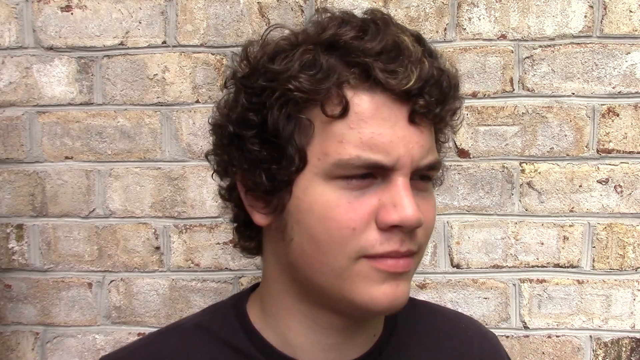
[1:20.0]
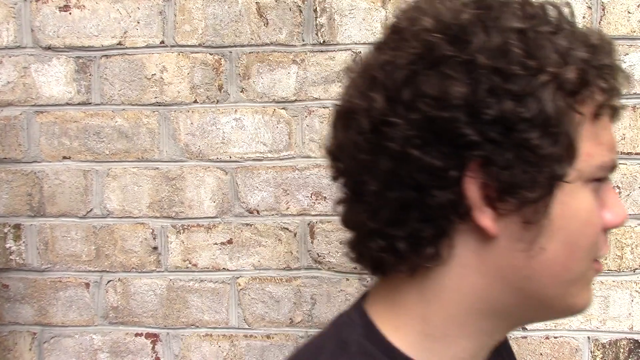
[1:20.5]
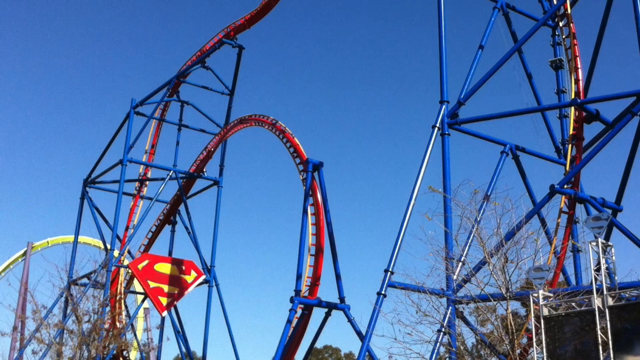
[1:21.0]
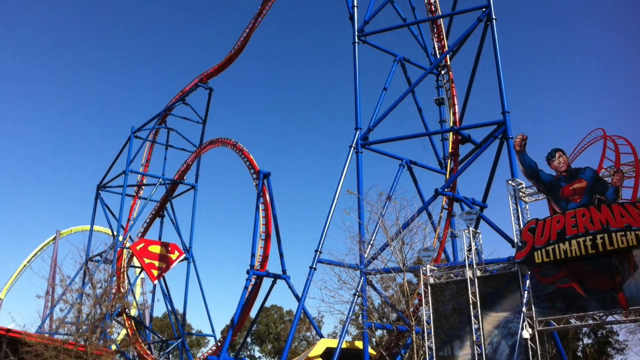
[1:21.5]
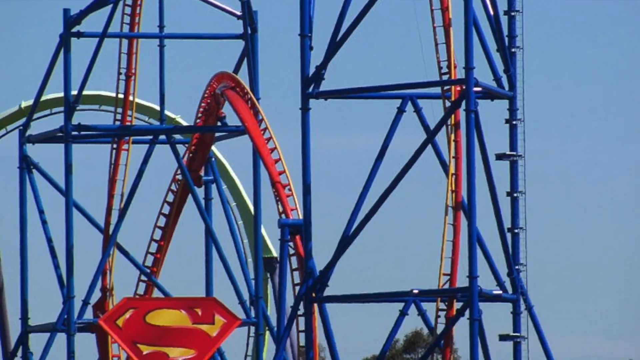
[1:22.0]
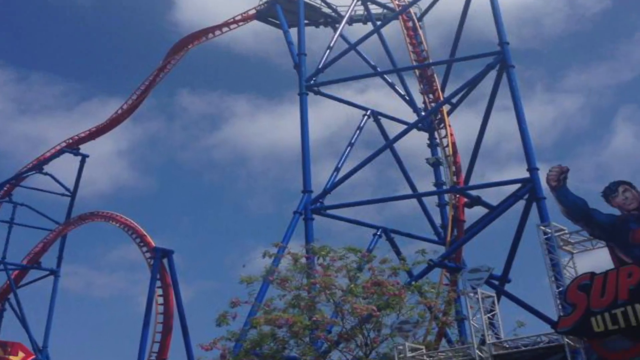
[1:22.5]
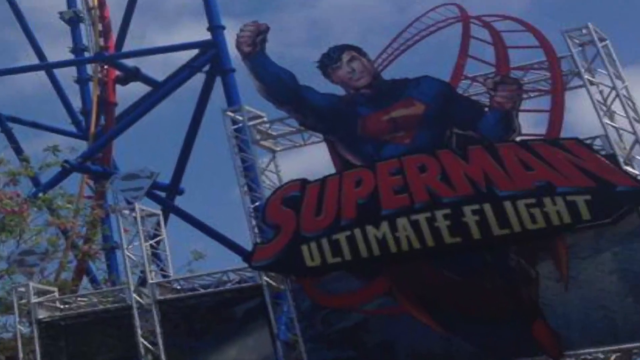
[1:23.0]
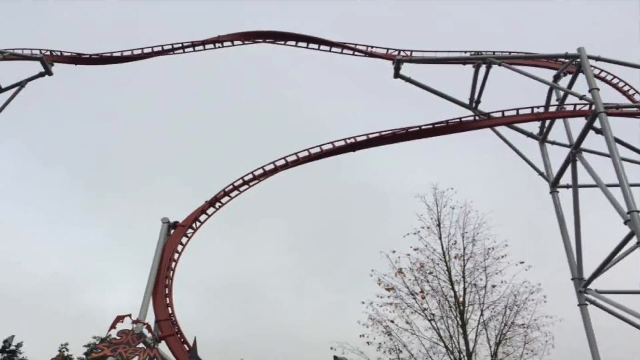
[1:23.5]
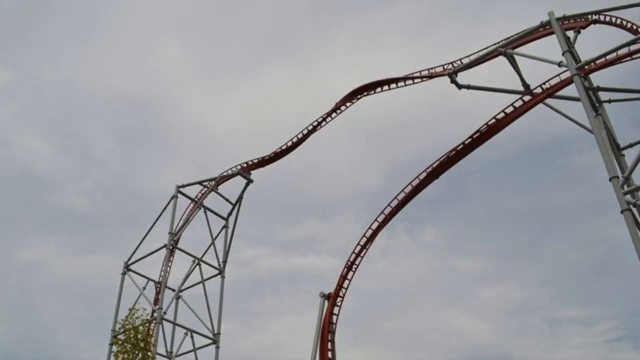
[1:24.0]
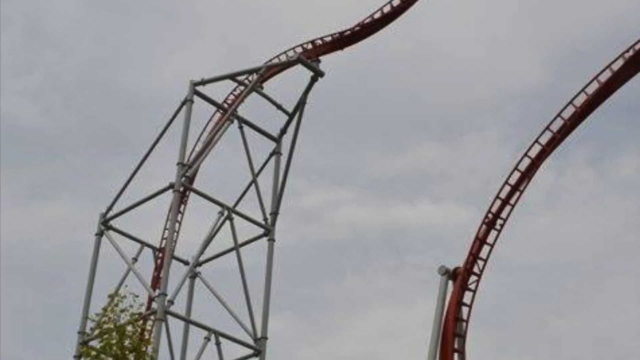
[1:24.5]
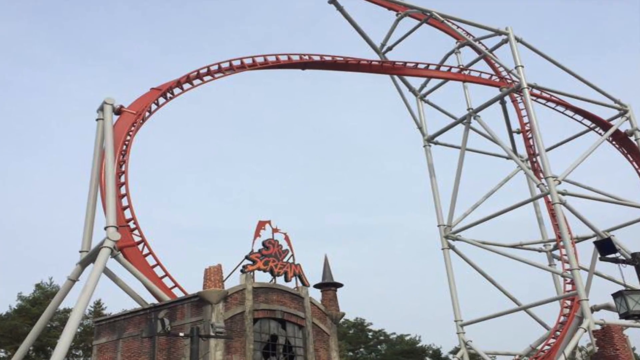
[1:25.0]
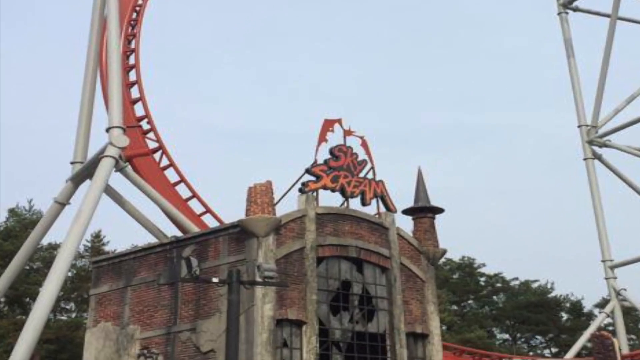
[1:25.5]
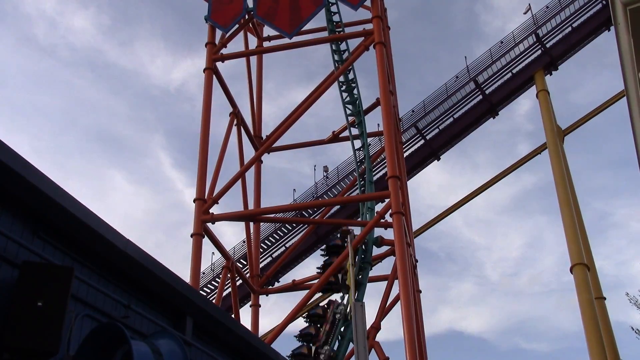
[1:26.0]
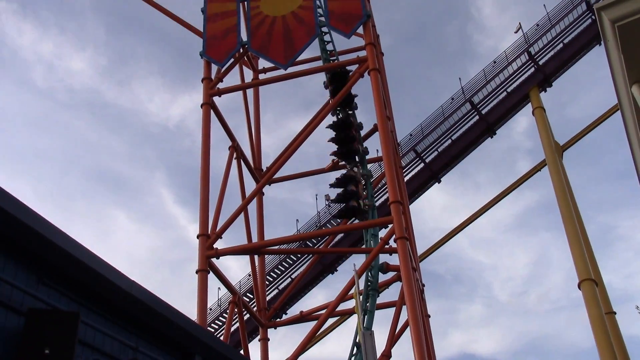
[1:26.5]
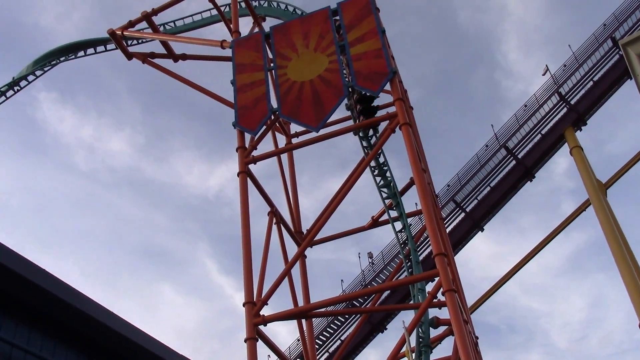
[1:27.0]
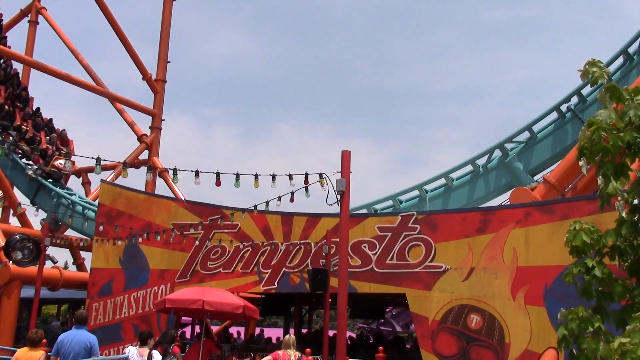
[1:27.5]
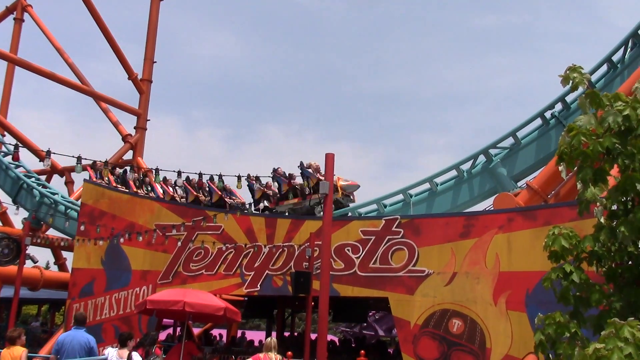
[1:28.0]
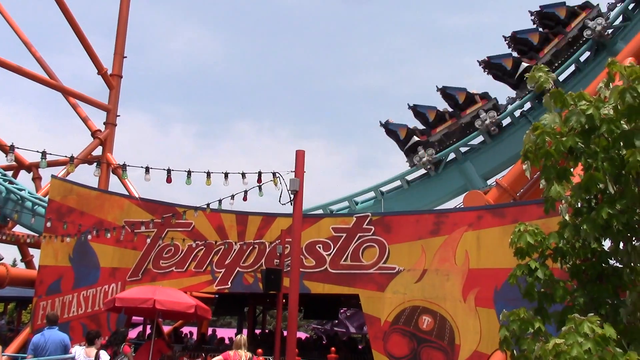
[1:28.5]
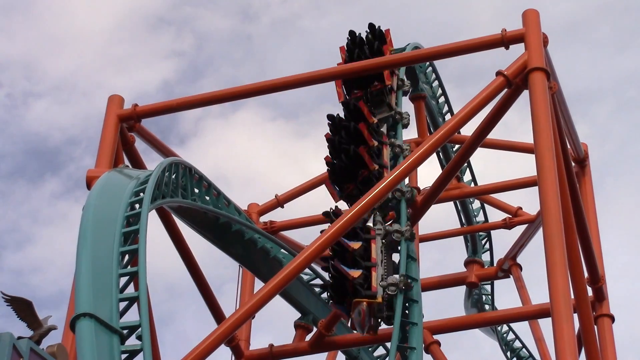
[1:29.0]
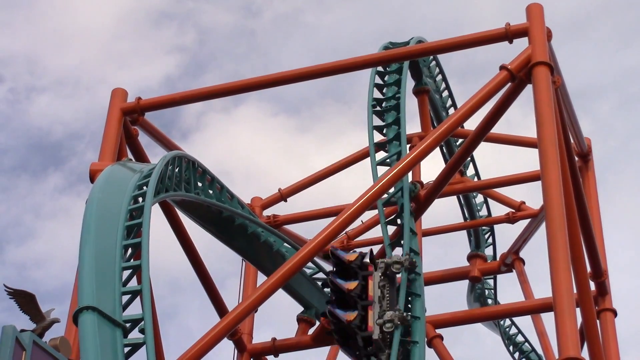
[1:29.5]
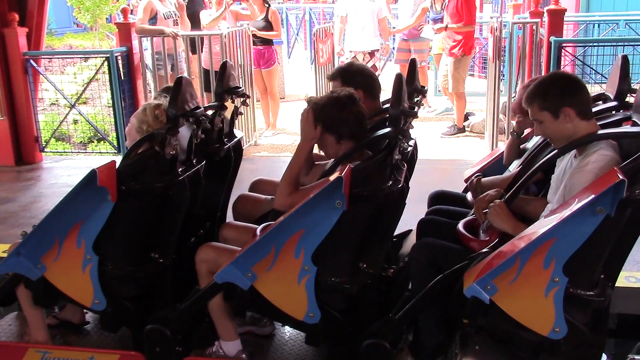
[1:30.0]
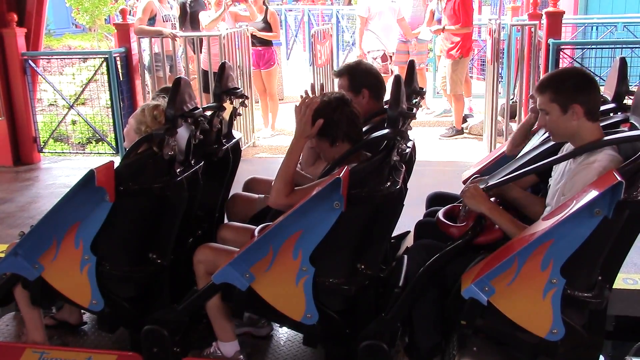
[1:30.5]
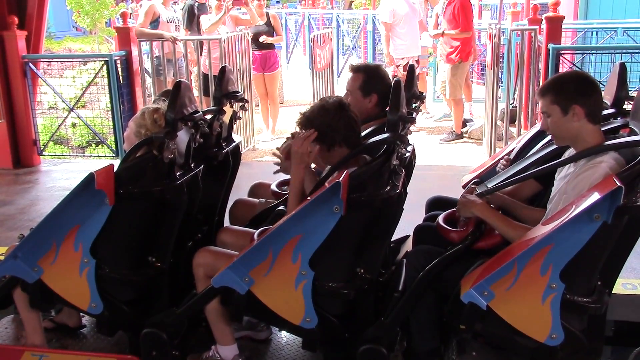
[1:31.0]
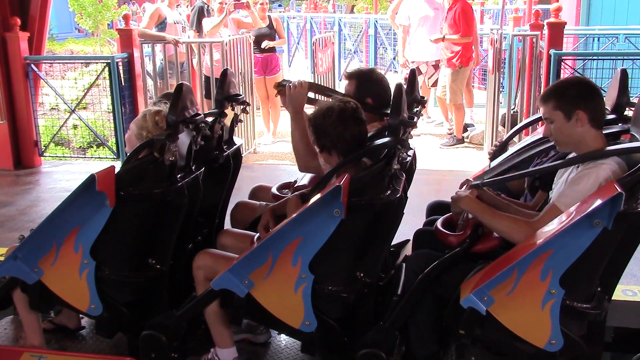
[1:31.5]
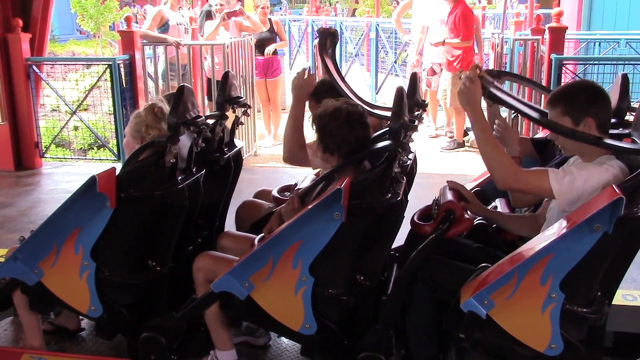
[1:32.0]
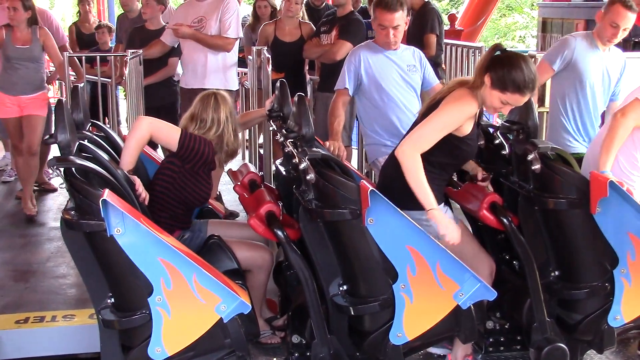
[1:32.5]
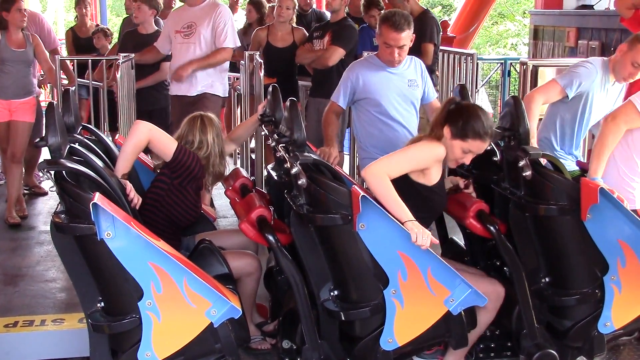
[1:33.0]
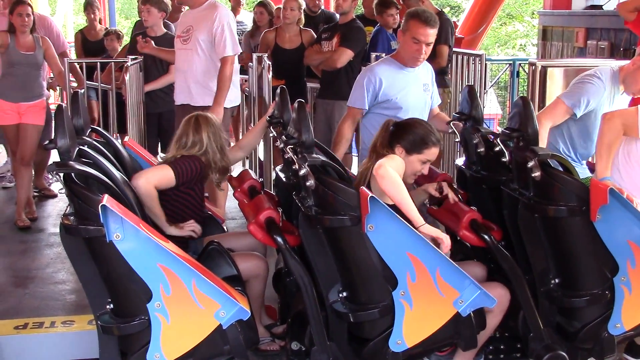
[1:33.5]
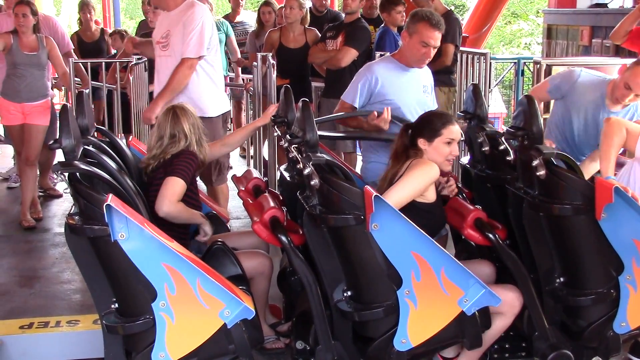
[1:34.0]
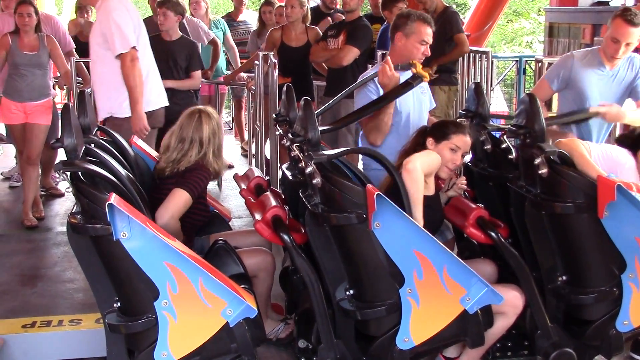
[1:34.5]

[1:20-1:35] The young man with curly hair and a black shirt walks off the left side of the frame. The video cuts to various shots of roller coaster tracks, starting with several panned-out views of a very tall roller coaster with red track rails and blue supporting scaffolding pipes. Across about two or three shots, one pans down to the right to focus on the ride's name, Superman, showing an image or billboard of the character Superman. More wide views show the very tall coaster with several tiers; it looks kind of flimsy, supported by just piping. The camera pans to another roller coaster, presumably in the same park, which moves almost vertically upward, then comes down a ramp and starts up another part almost like a loop, crossing over a sign reading "Tempesto" in red over a graphic of a sun with bursting rays, presumably the ride's name. Many people are inside as it goes by. Presumably the same coaster is then shown stationary, apparently with the ride ended; about six people lift their safety restraints to exit. Another group of people then enters the coaster, sitting down and buckling their restraints and securing their harnesses.